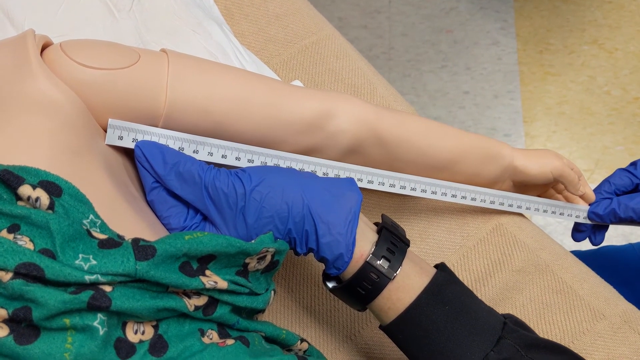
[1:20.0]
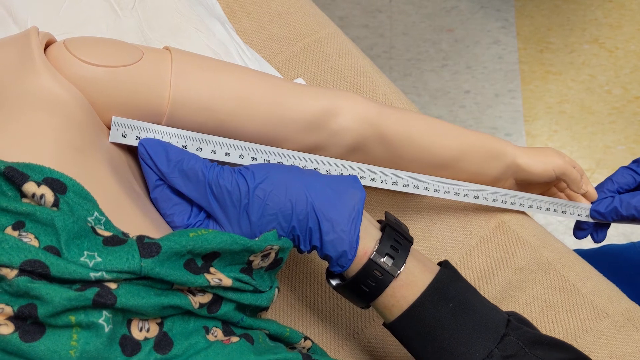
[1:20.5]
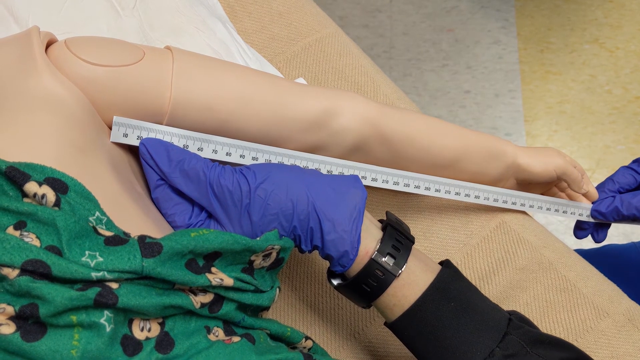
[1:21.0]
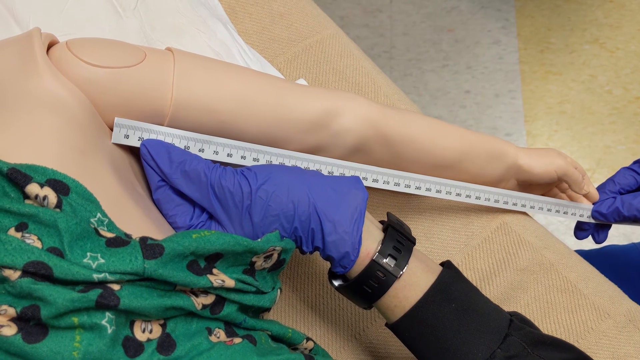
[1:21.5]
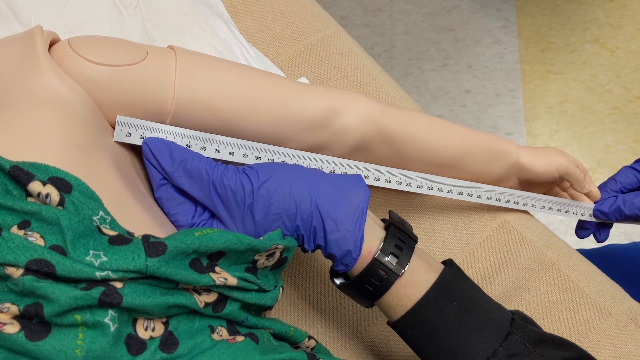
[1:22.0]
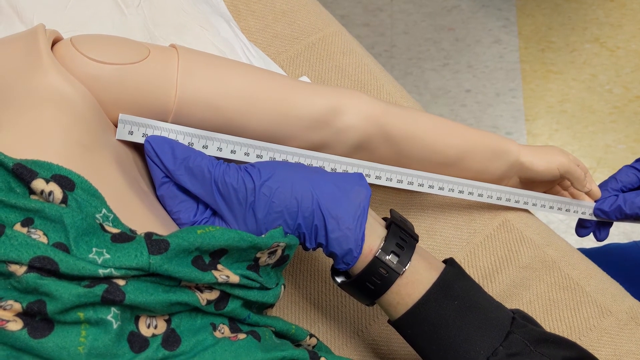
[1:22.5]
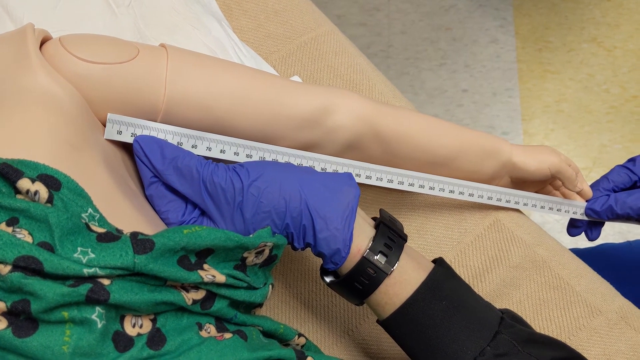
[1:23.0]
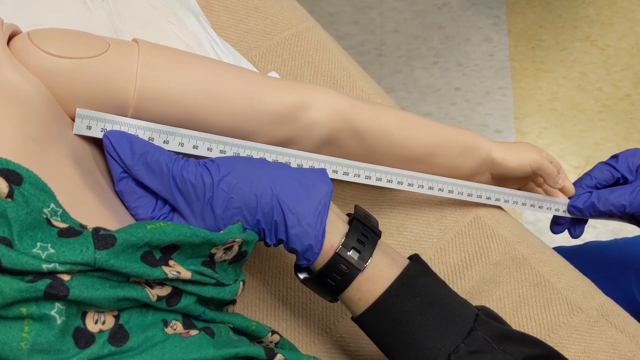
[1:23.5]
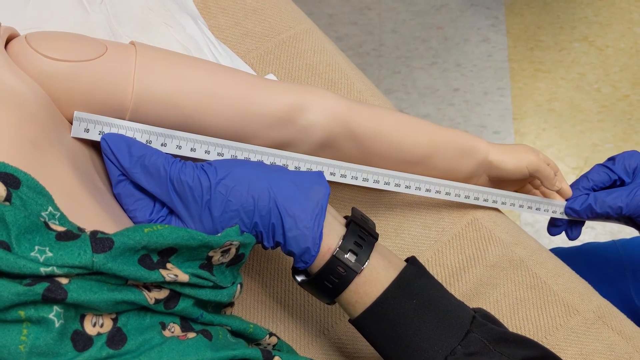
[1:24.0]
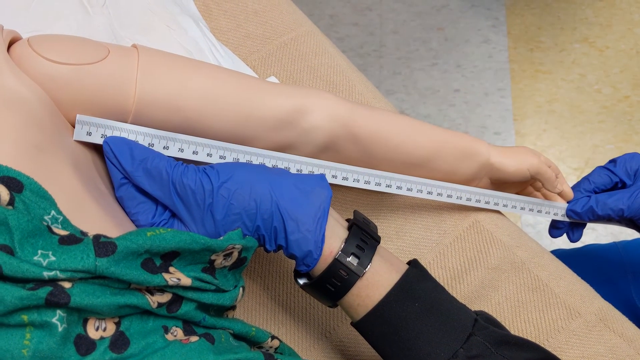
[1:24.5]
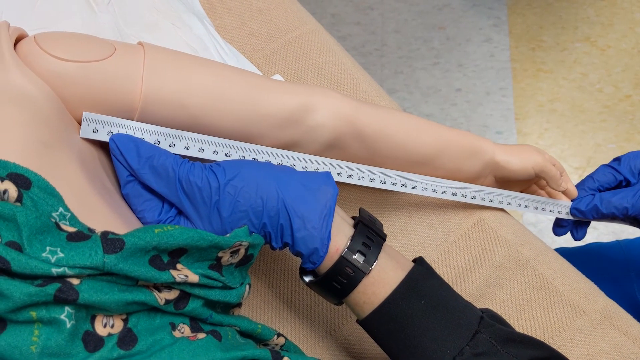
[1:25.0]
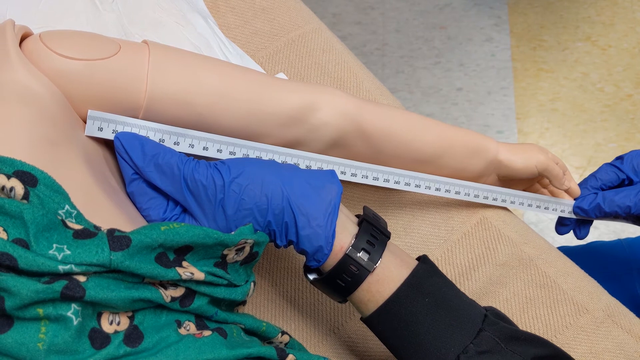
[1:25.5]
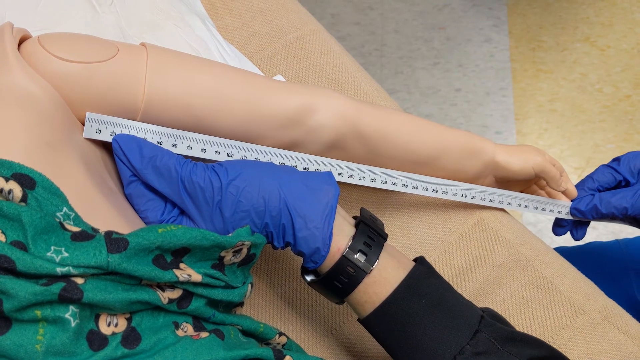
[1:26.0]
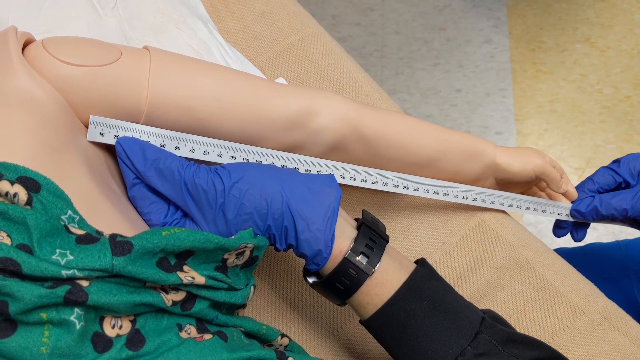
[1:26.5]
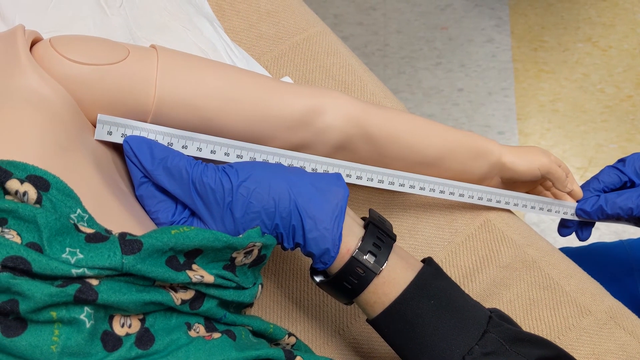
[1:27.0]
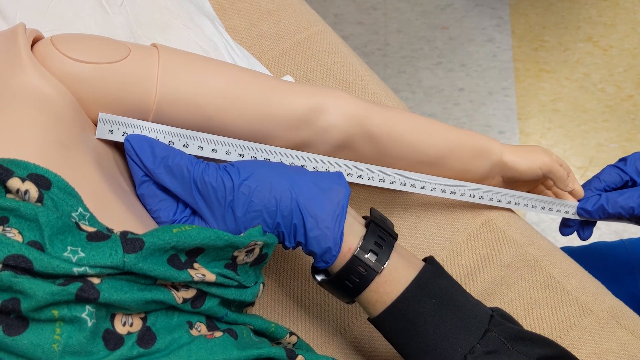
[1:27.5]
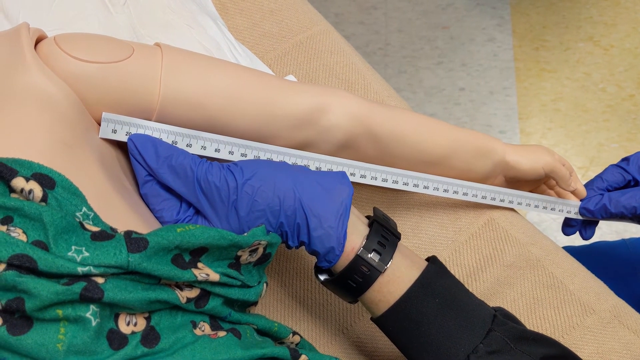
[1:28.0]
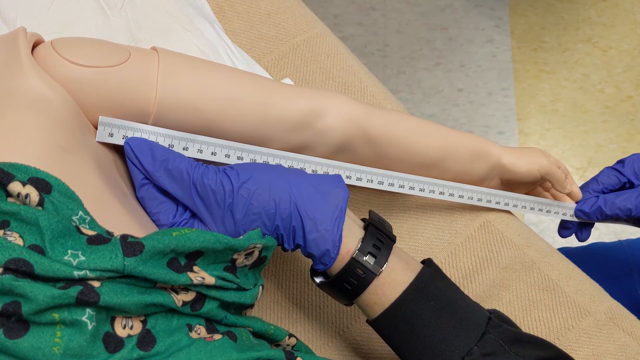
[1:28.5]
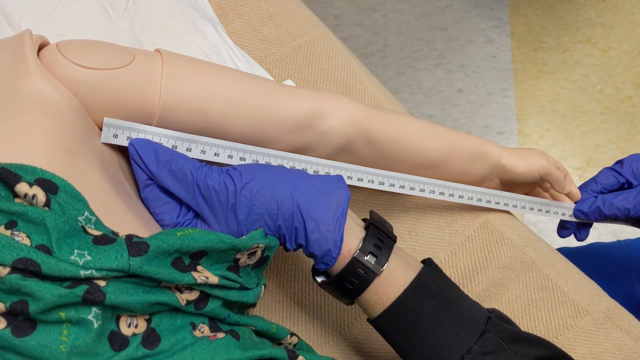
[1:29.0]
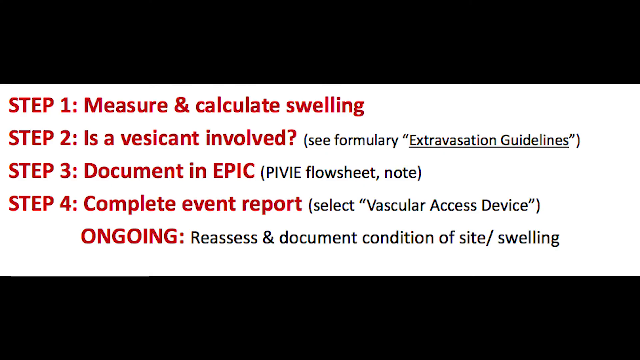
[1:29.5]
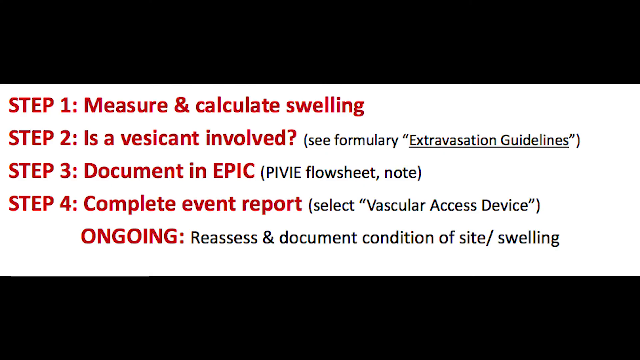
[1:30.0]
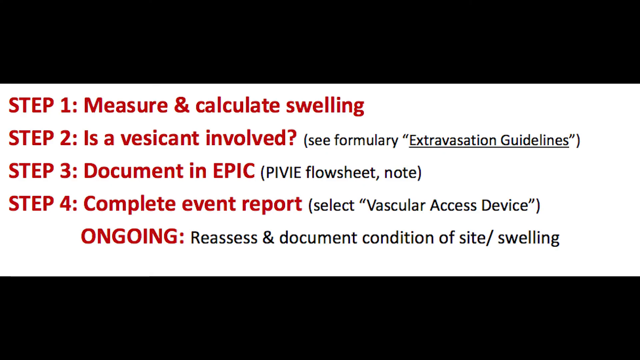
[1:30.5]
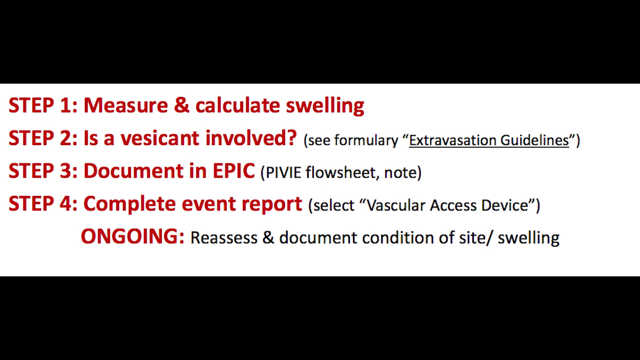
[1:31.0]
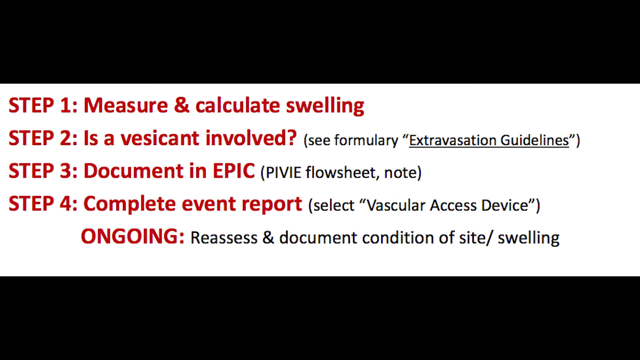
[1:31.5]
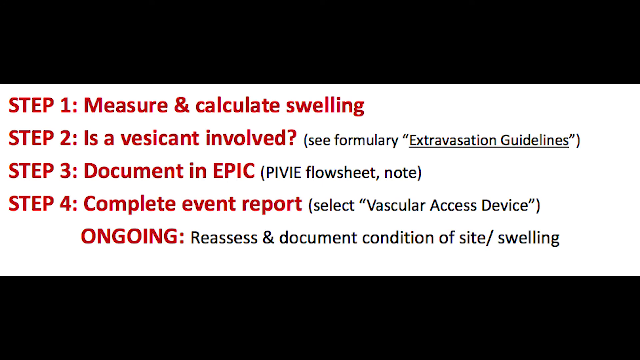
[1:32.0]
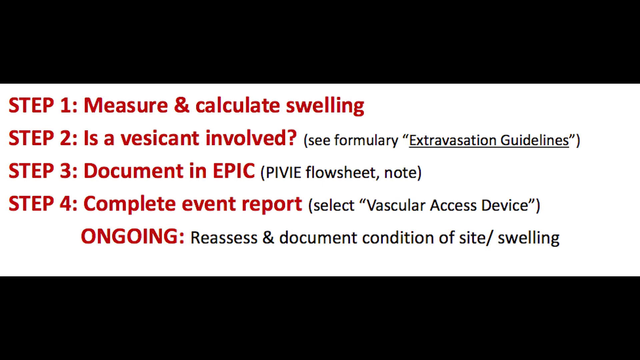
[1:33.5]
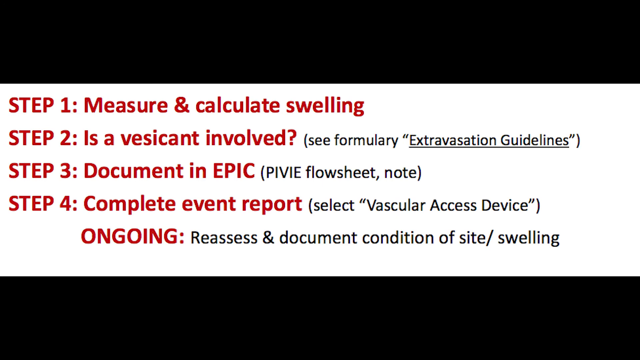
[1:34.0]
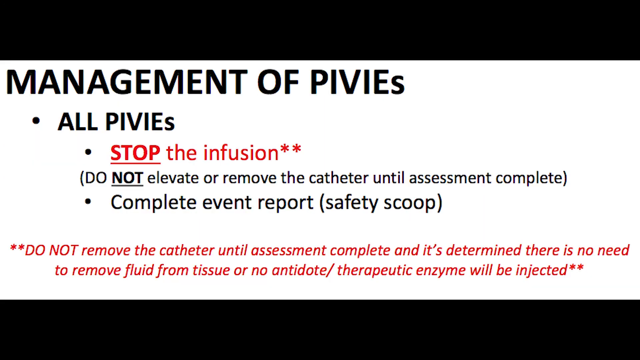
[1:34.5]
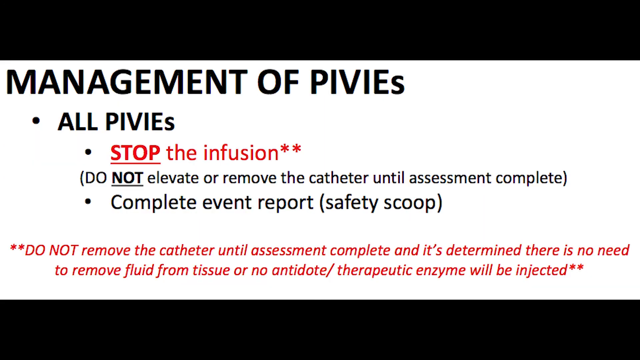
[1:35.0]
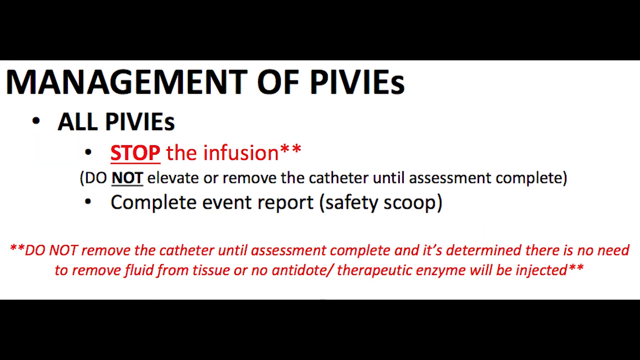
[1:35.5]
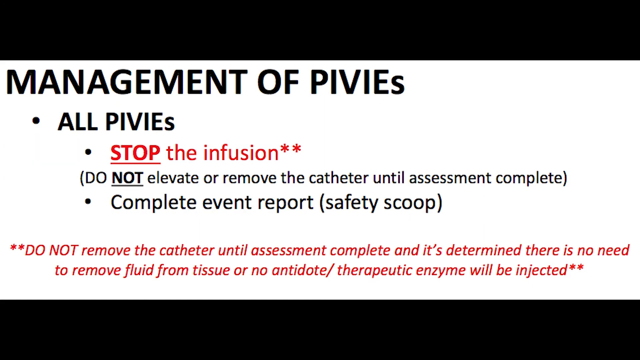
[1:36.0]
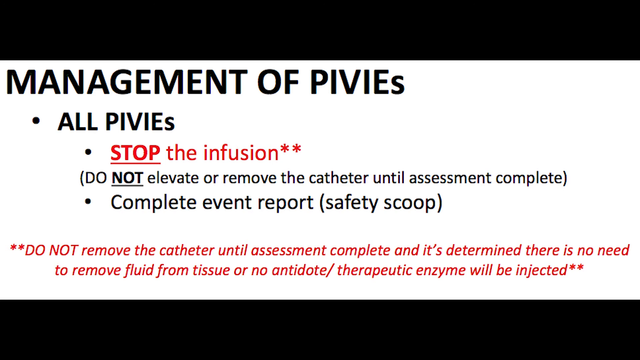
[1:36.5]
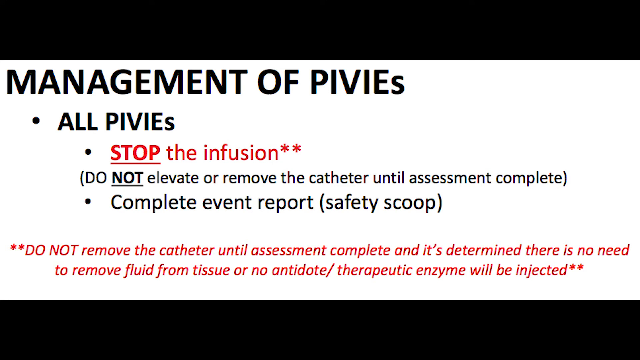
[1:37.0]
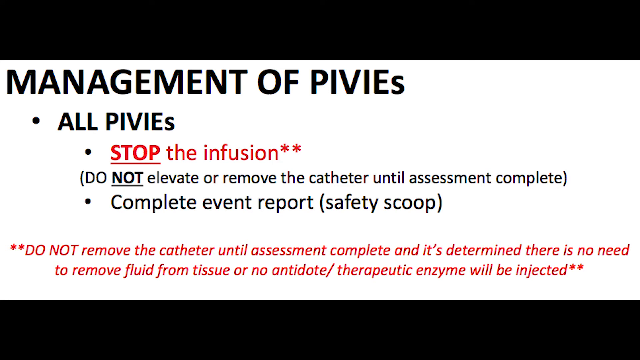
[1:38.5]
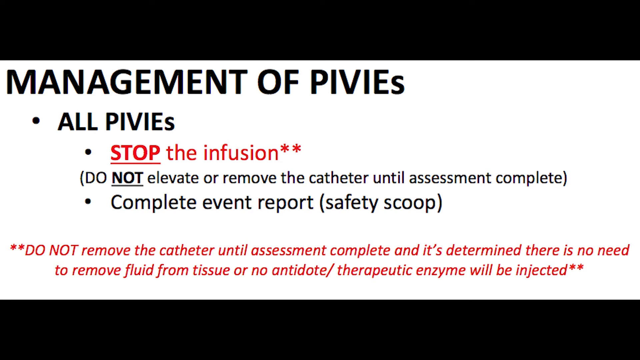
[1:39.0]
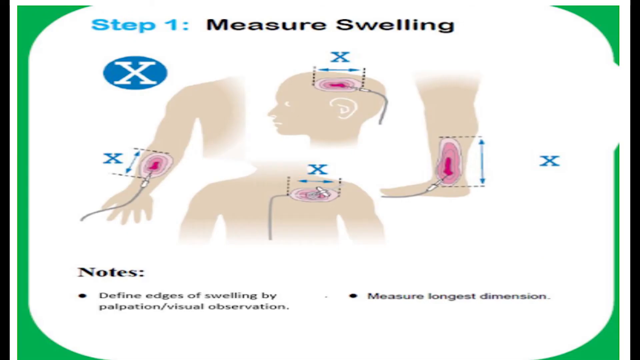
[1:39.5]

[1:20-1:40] The person measuring the arm holds the tape measure straight against the bottom of the child mannequin's bicep and forearm. The next screen shows a four-step list, with the steps in red and where the information was found listed next to each in black: step one, "measure and calculate swelling"; two, "is a vesicant involved"; three, "document an epic"; and four, "complete event report." The following screen has a black title reading "Management of PIVIEs" with three bullet points underneath stating that for all PIVIEs, stop the infusion and do not elevate or remove the catheter until the assessment is complete, and to complete the event report and safety scoop. A reminder at the bottom of the screen says not to remove the catheter until the assessment is complete and a determination is made that there is no need to remove fluid from tissue or that no antidote or therapeutic enzyme will be injected.